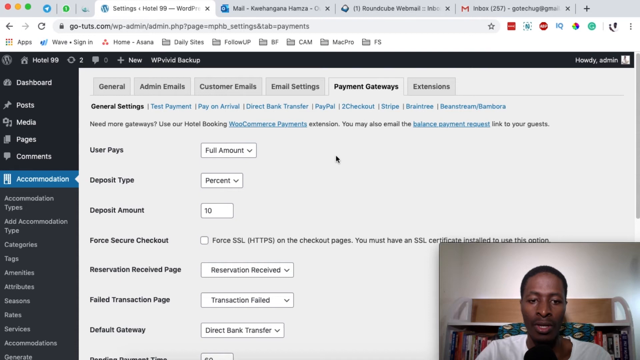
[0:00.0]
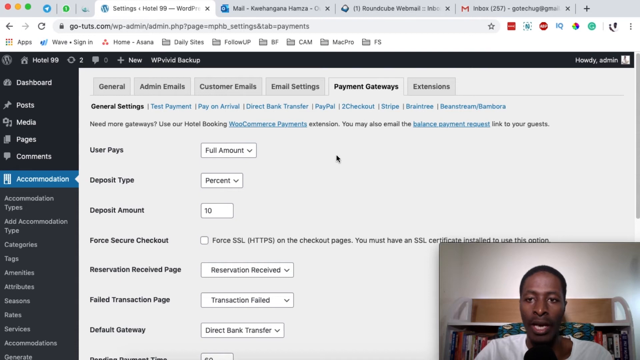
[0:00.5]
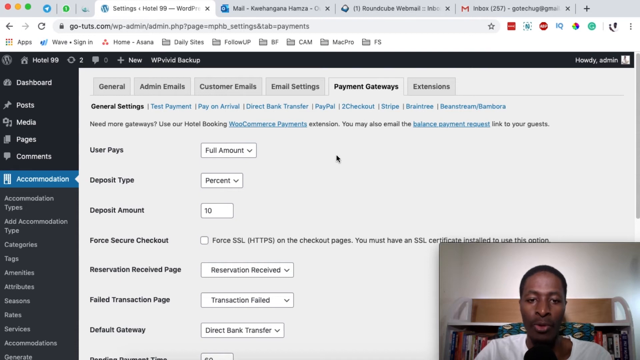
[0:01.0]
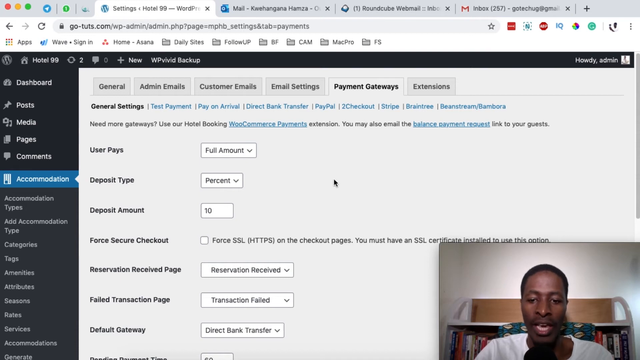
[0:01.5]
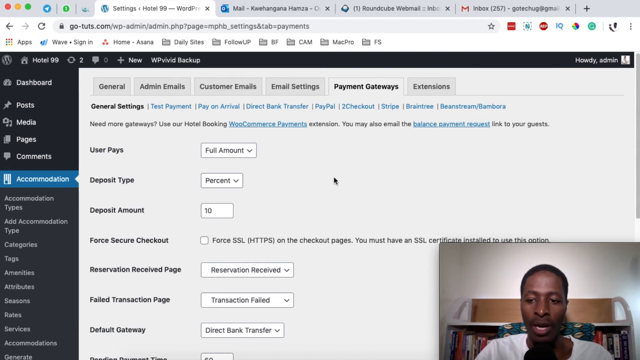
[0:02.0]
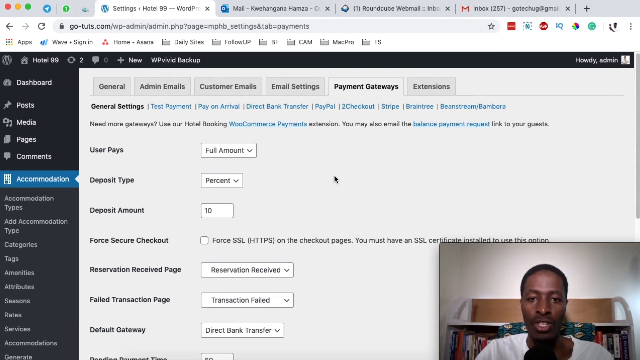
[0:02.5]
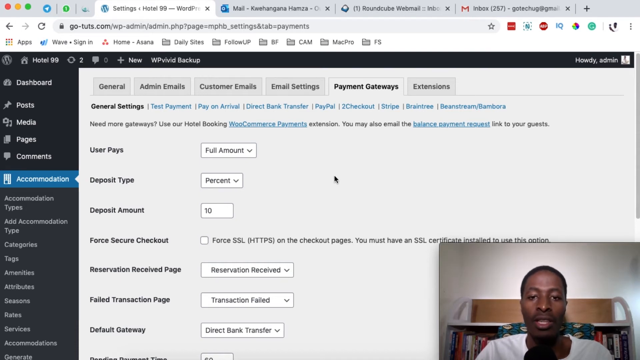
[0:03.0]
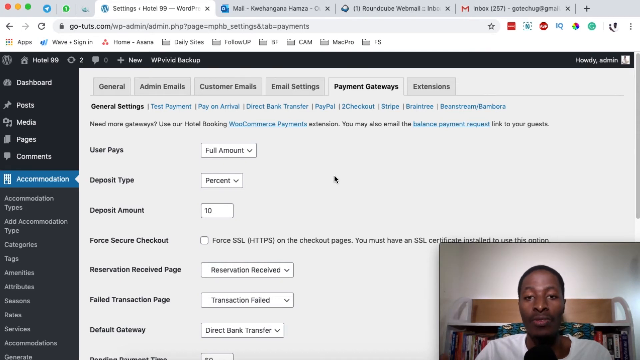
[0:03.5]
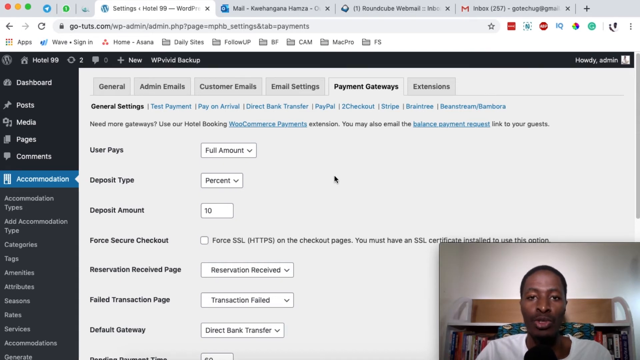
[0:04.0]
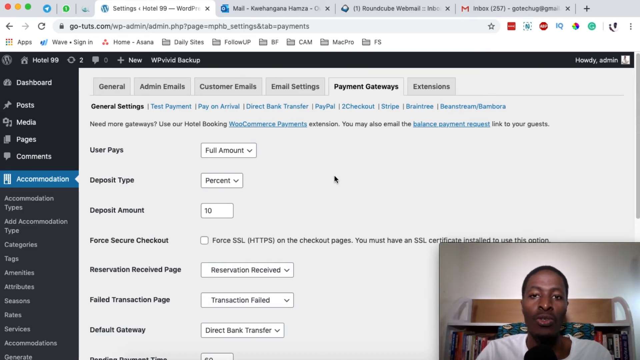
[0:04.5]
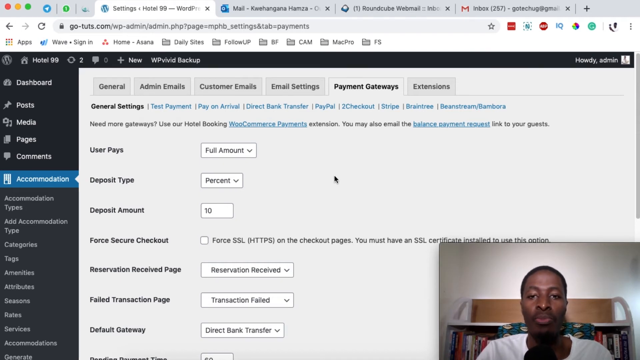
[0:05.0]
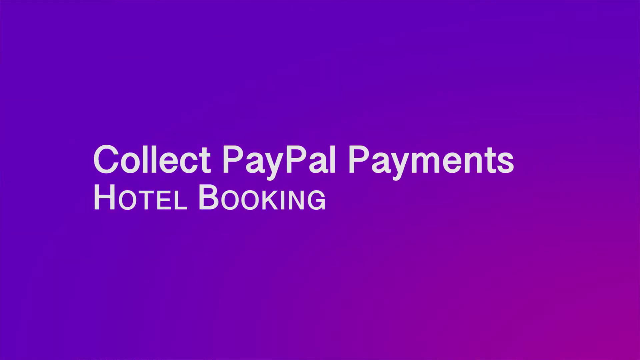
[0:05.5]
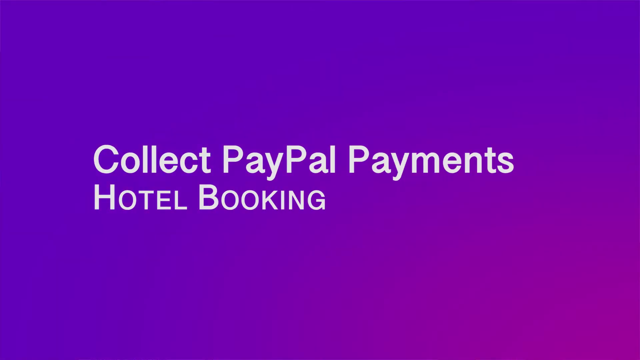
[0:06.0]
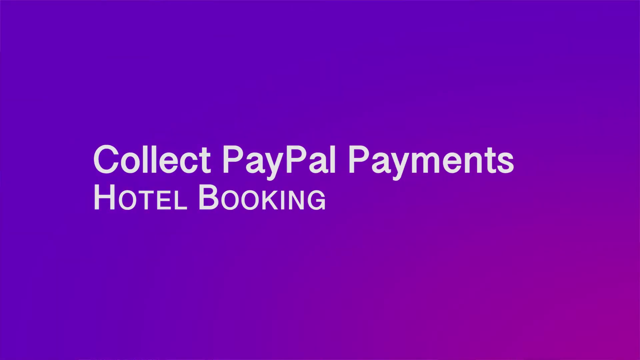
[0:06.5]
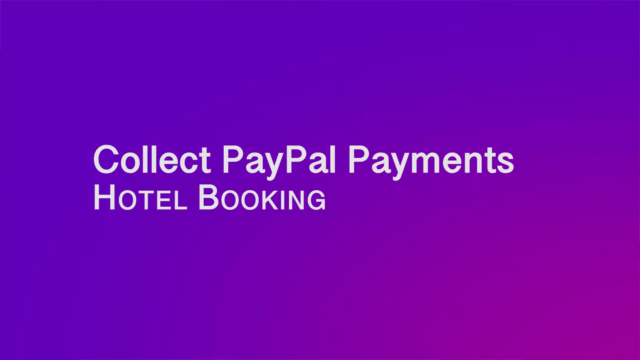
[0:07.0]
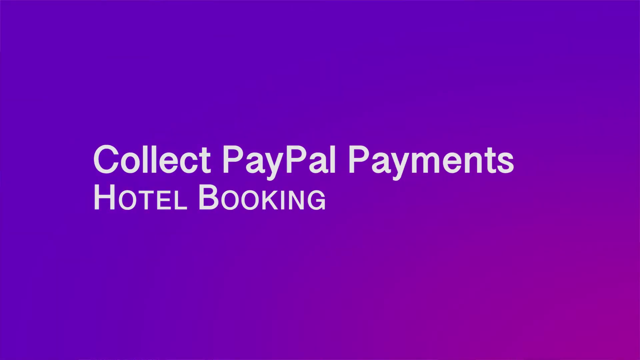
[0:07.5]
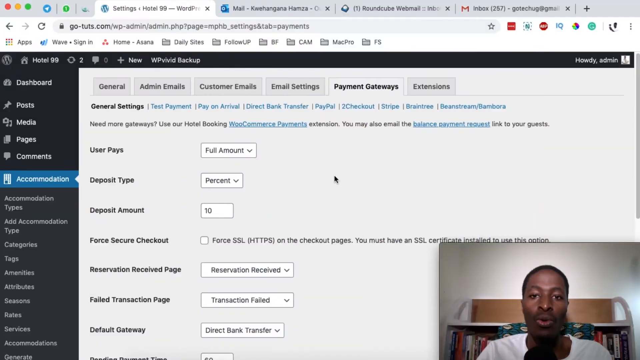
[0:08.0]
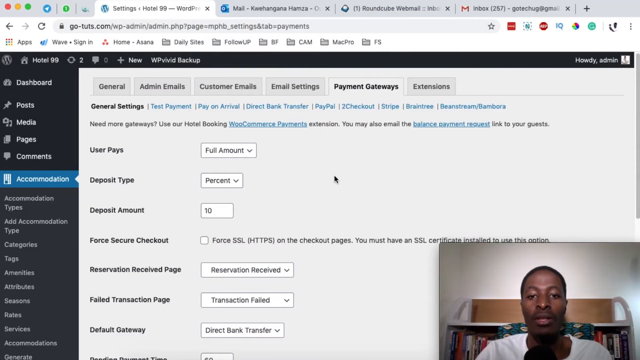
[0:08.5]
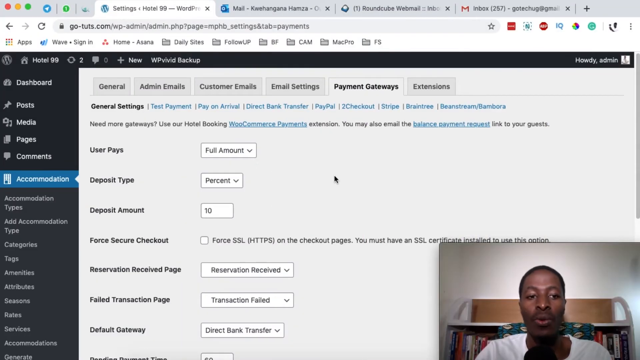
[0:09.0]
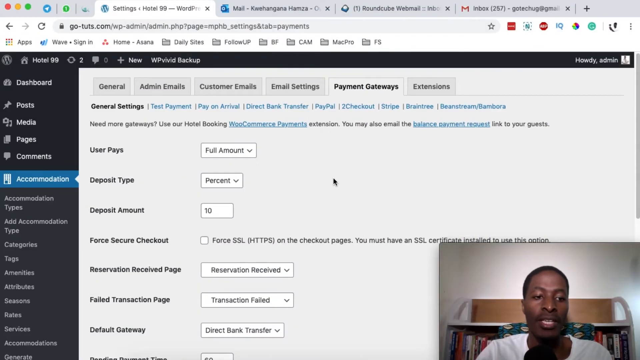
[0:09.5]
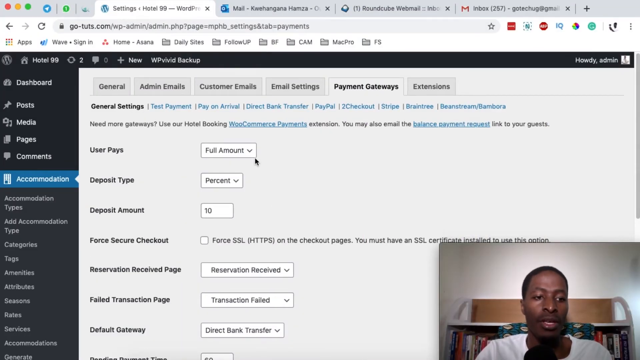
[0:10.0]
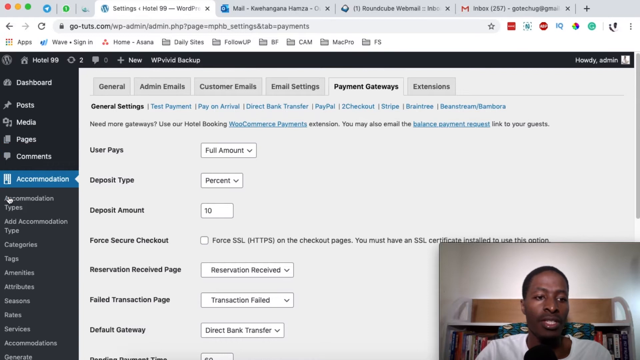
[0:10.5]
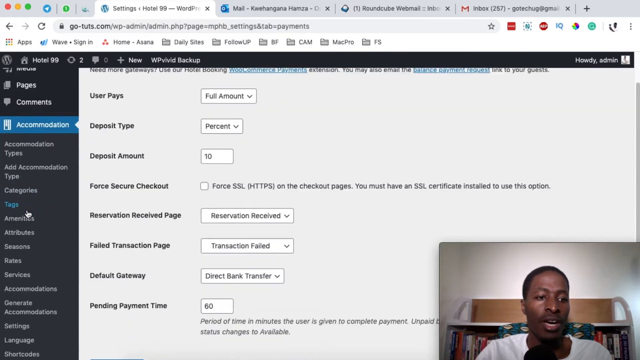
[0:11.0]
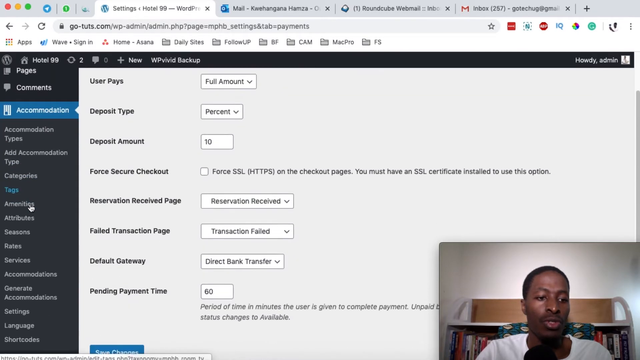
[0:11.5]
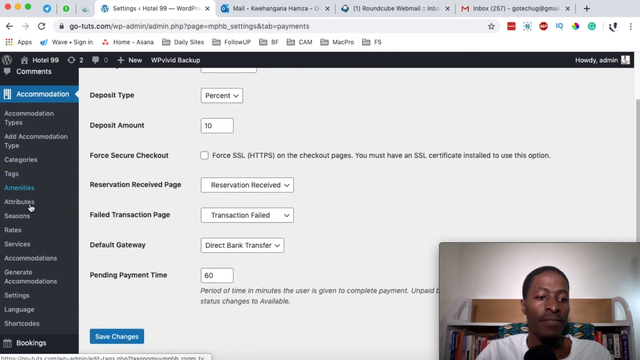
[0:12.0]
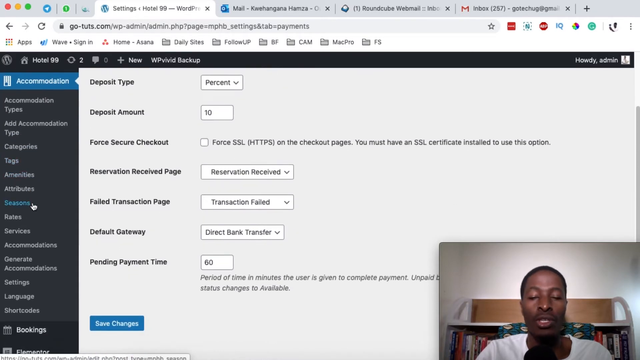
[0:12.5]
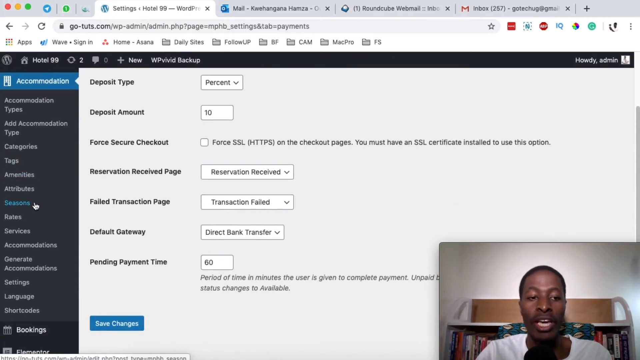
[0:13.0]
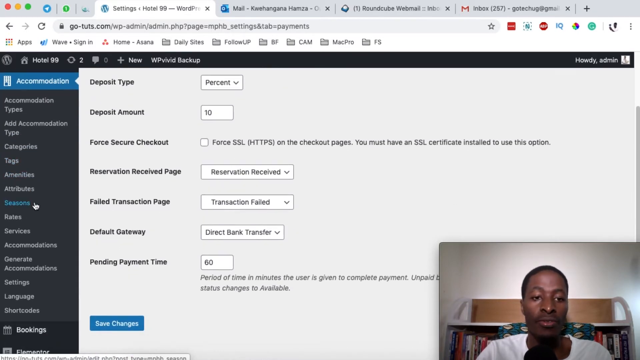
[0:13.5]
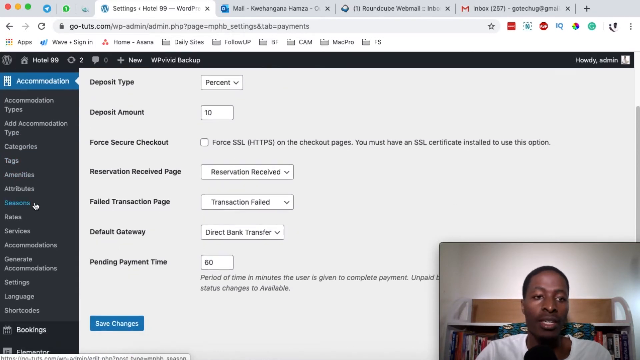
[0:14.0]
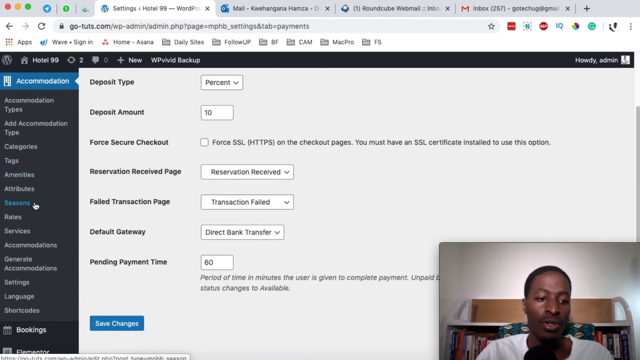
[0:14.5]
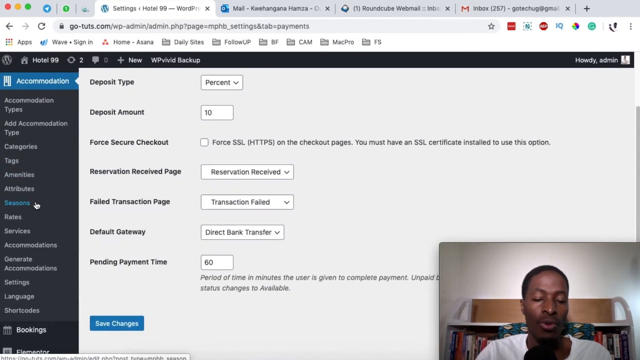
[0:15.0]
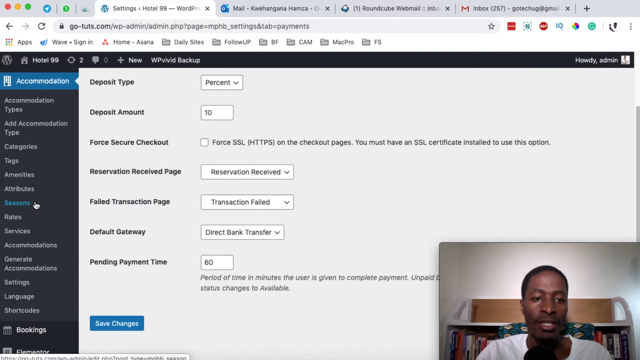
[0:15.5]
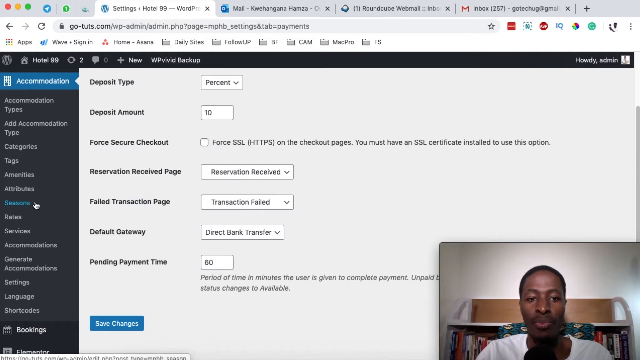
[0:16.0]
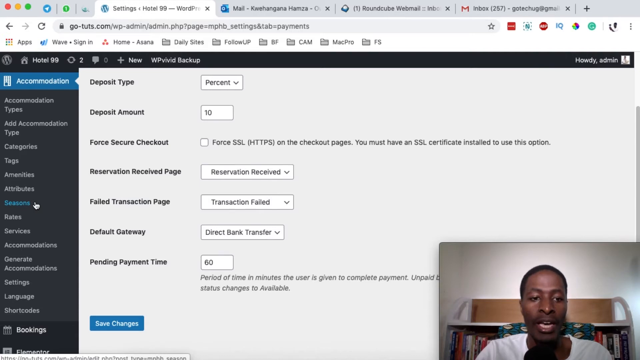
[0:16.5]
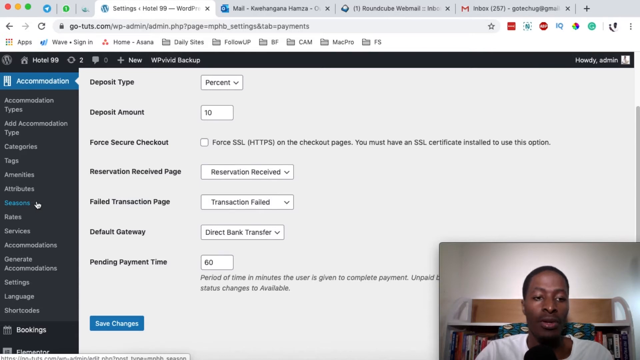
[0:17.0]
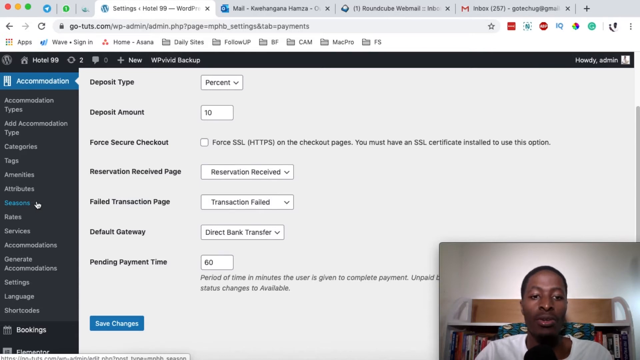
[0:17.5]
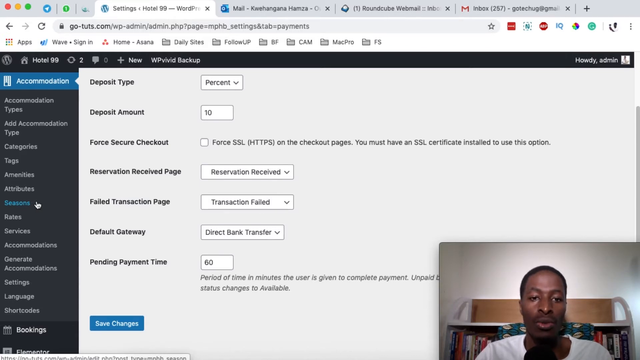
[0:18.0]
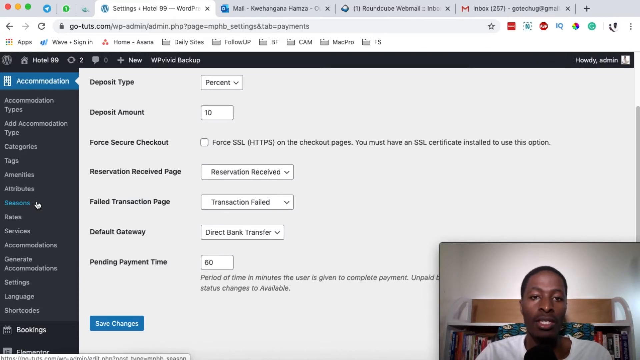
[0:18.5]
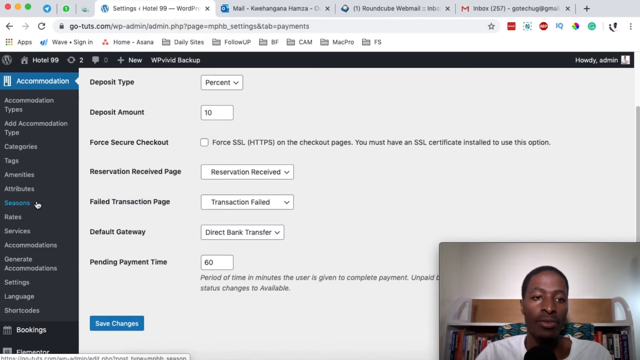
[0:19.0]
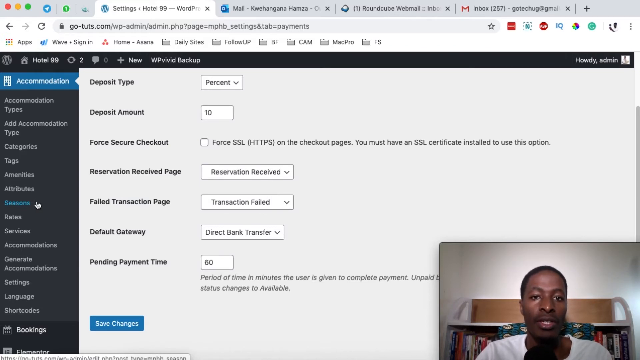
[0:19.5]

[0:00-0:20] An open web browser shows a web page whose address appears to begin with gotuts.com. The site is a WordPress website that someone has made. In the lower right corner of the screen, a man is shown talking in a picture-in-picture view, the kind of setup a streamer might use, while the website is in the background. The screen then changes to a purple background with the words "collect PayPal payments, hotel booking."